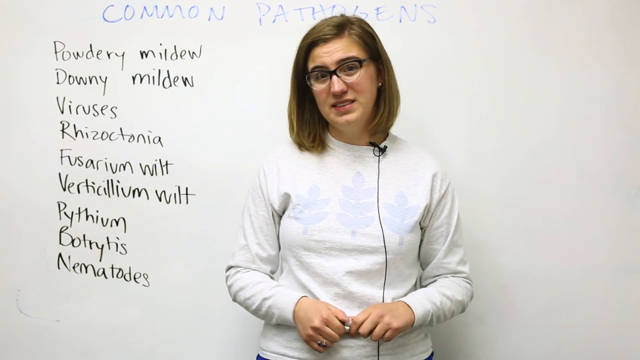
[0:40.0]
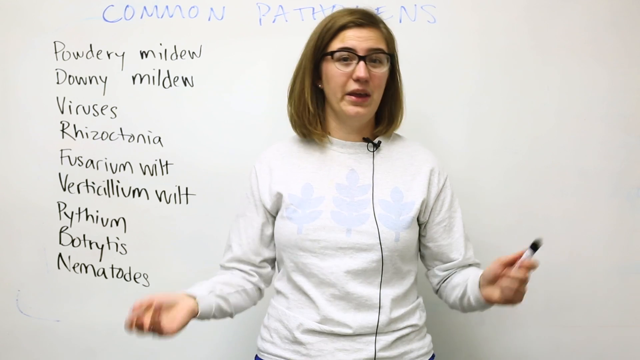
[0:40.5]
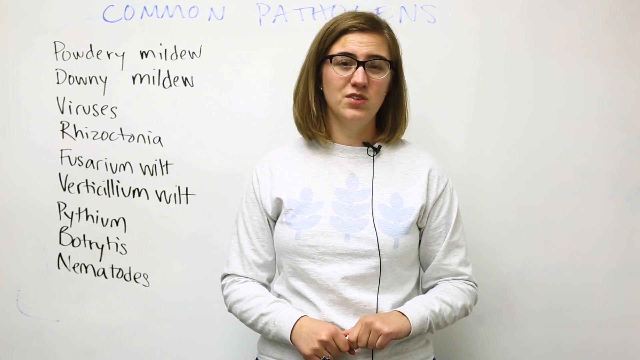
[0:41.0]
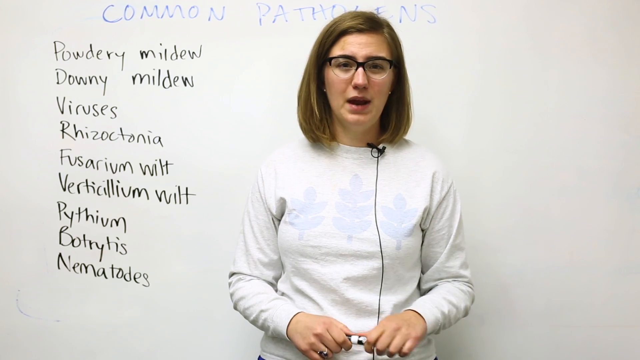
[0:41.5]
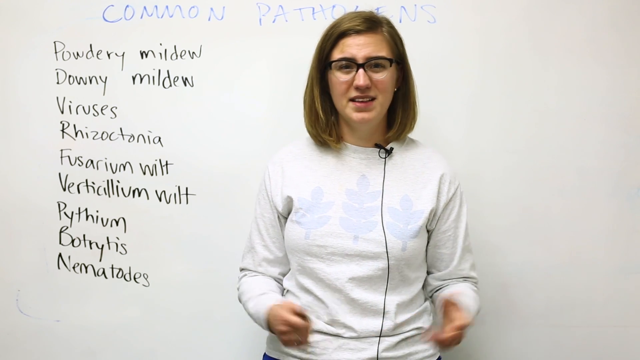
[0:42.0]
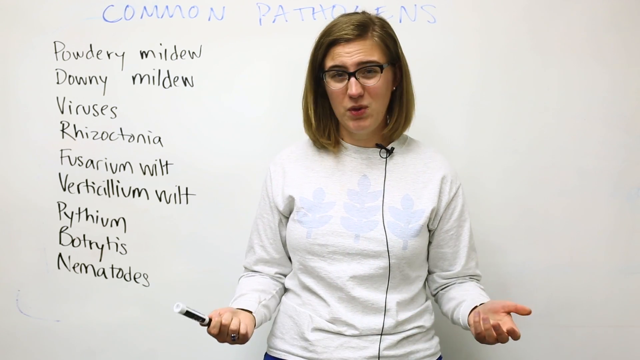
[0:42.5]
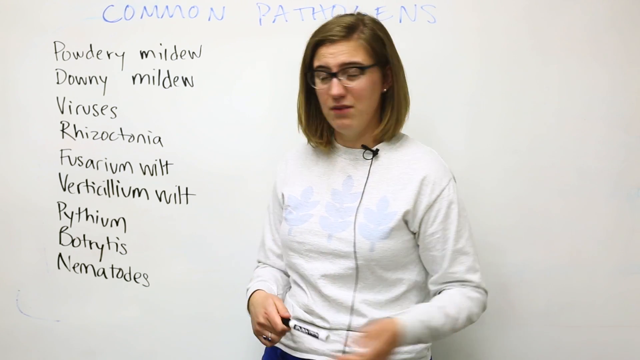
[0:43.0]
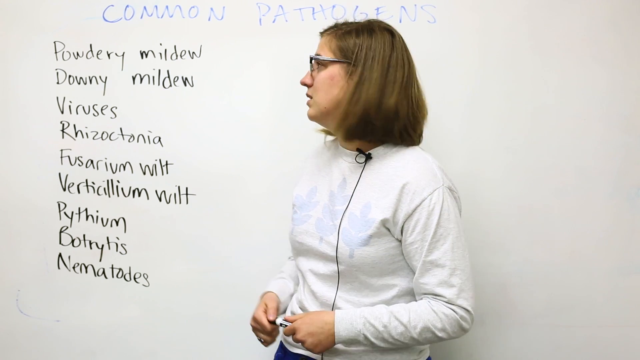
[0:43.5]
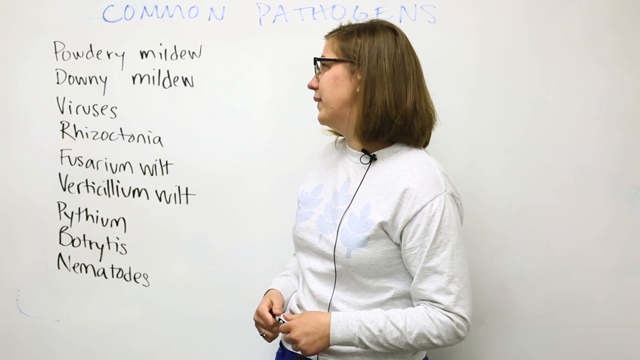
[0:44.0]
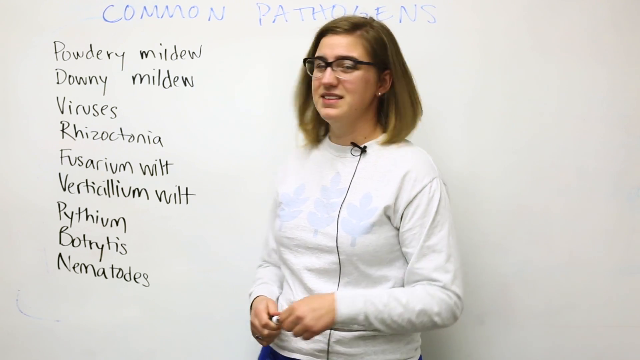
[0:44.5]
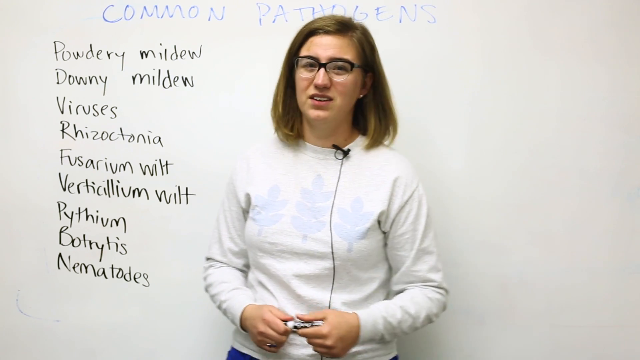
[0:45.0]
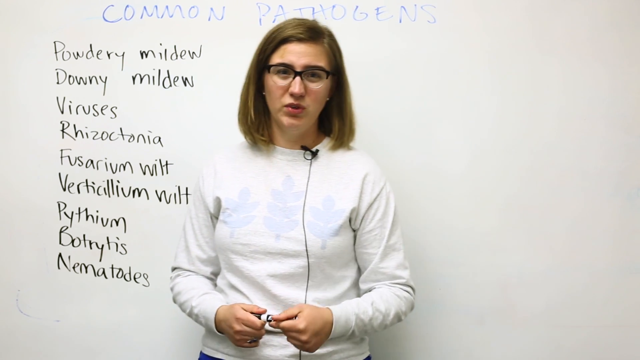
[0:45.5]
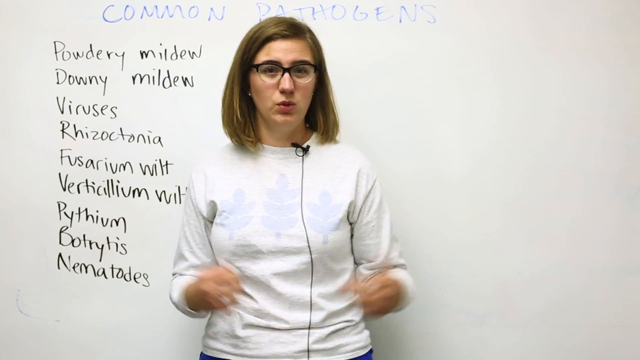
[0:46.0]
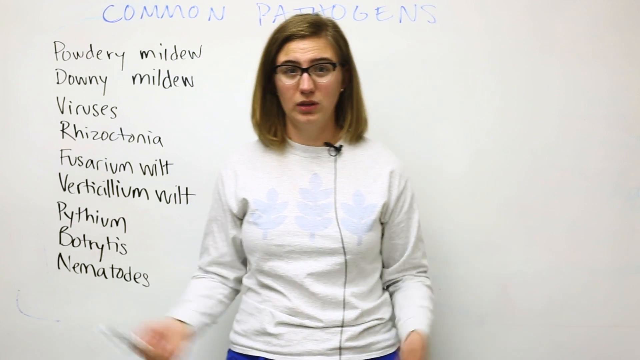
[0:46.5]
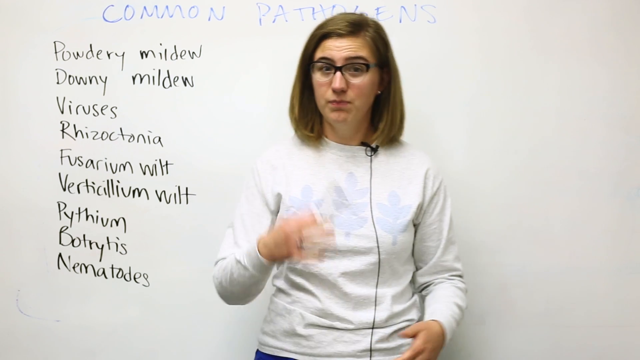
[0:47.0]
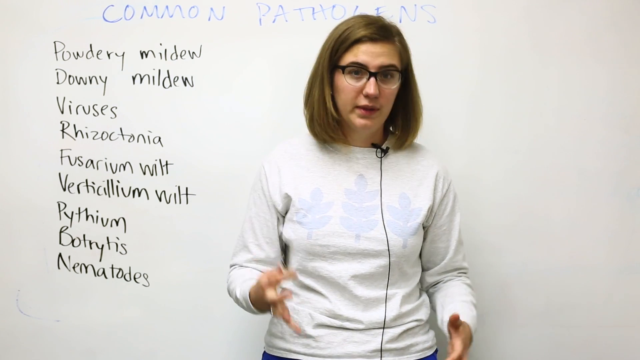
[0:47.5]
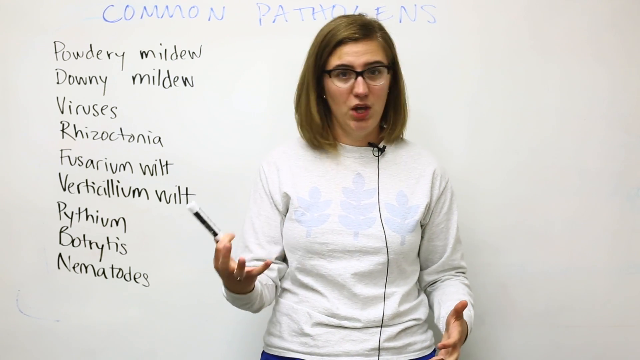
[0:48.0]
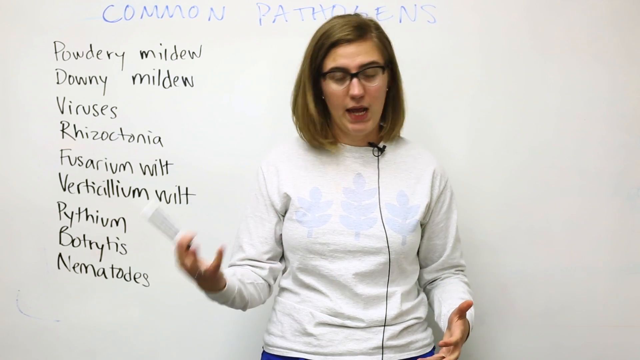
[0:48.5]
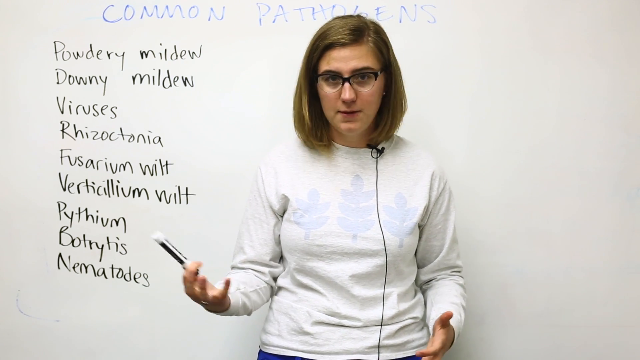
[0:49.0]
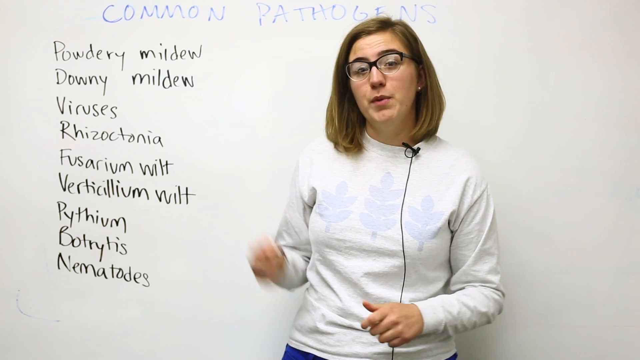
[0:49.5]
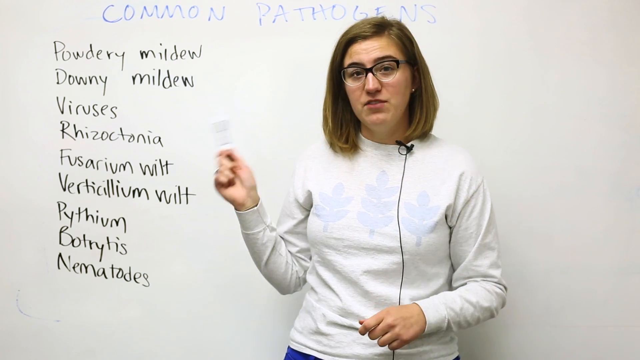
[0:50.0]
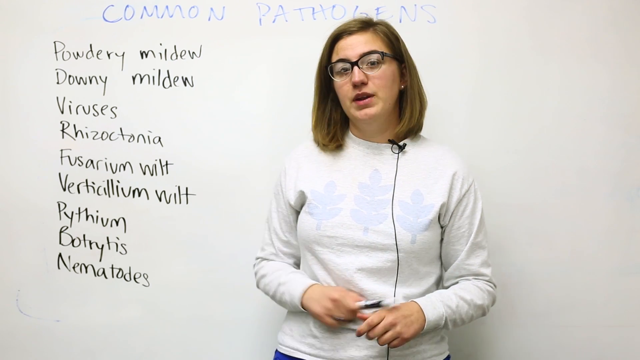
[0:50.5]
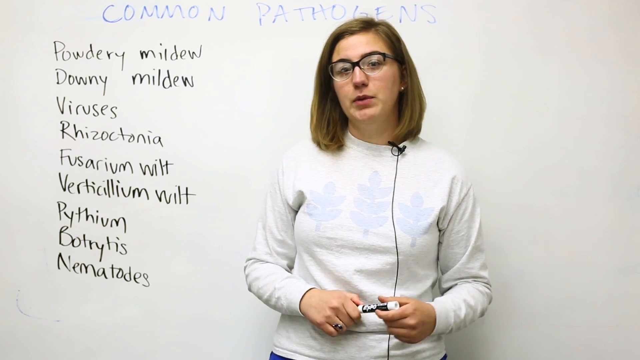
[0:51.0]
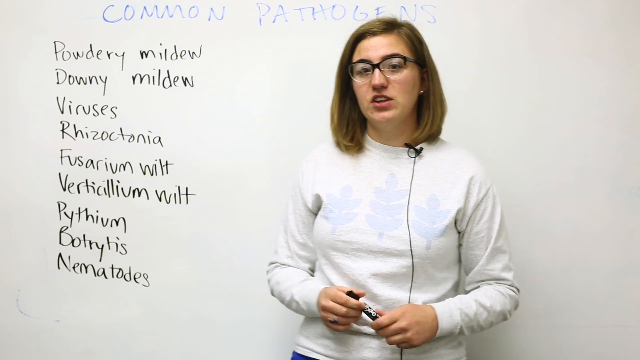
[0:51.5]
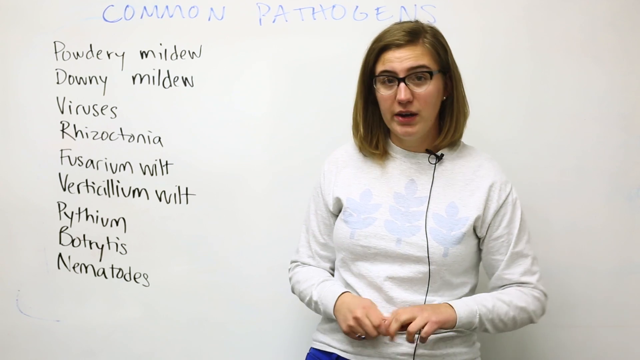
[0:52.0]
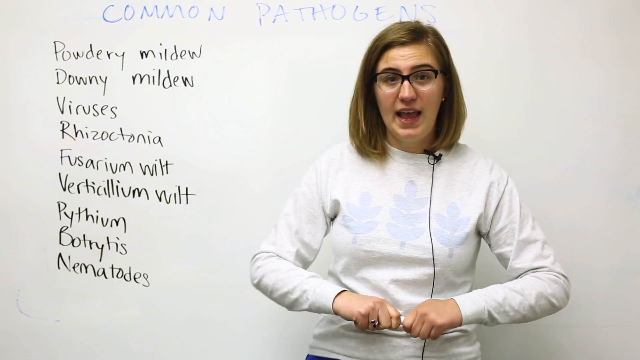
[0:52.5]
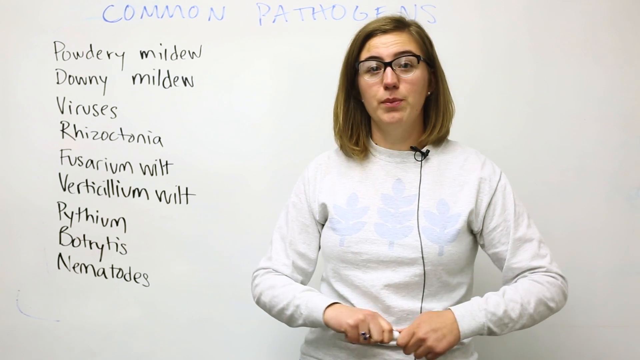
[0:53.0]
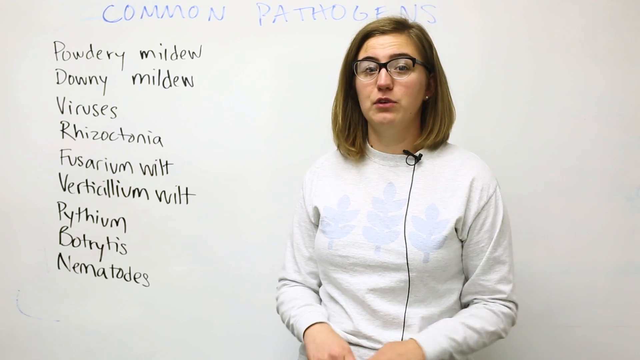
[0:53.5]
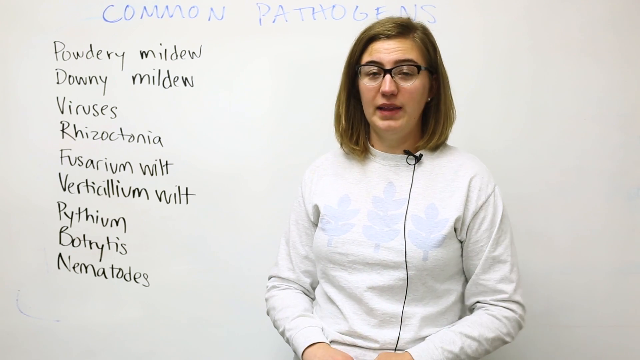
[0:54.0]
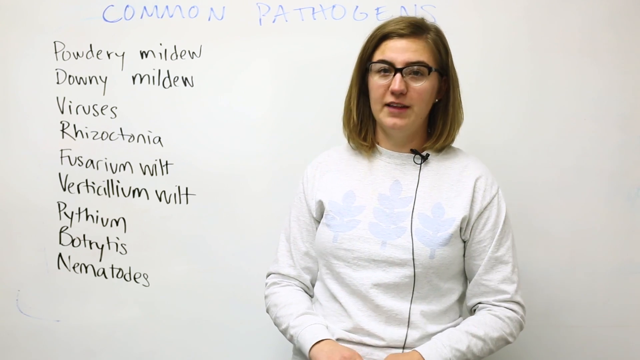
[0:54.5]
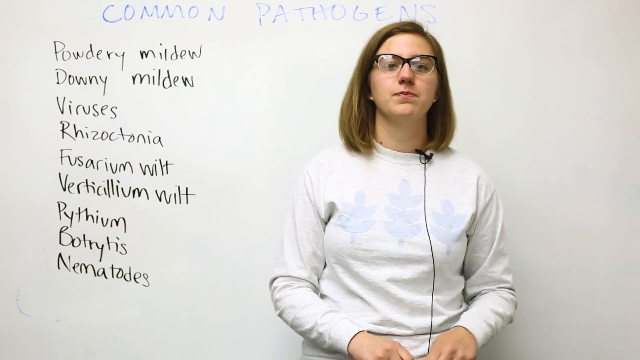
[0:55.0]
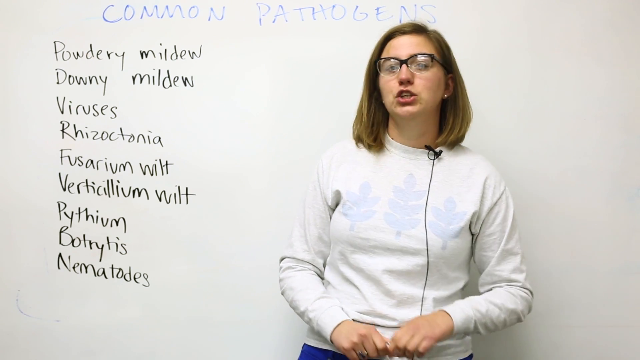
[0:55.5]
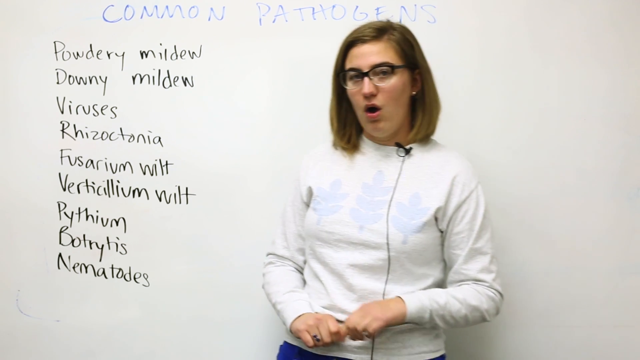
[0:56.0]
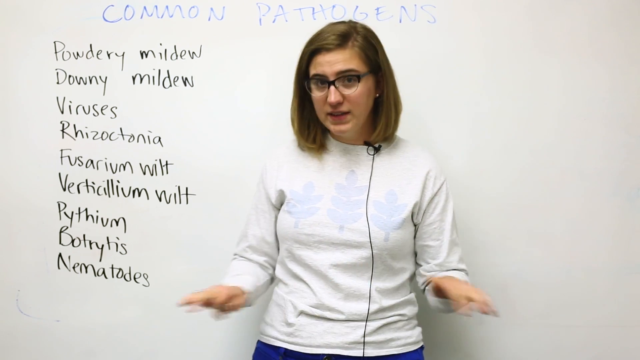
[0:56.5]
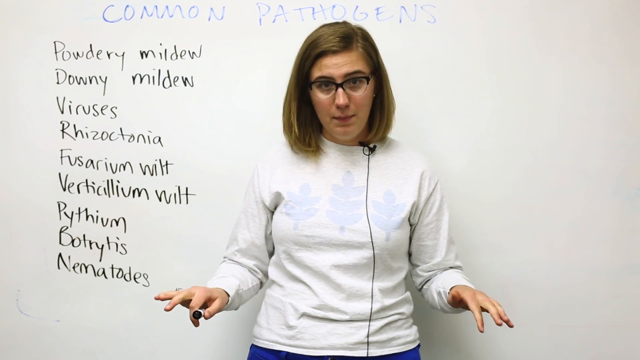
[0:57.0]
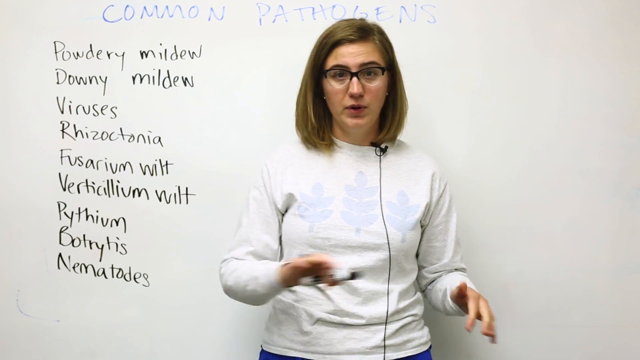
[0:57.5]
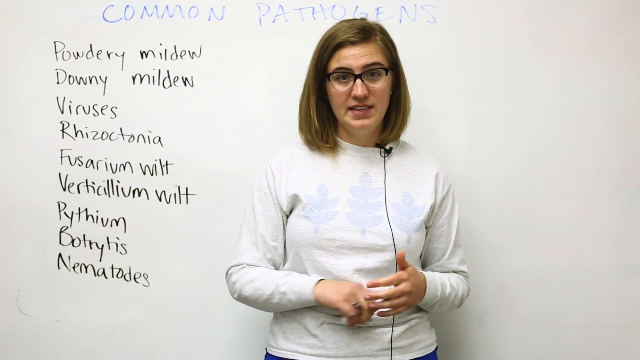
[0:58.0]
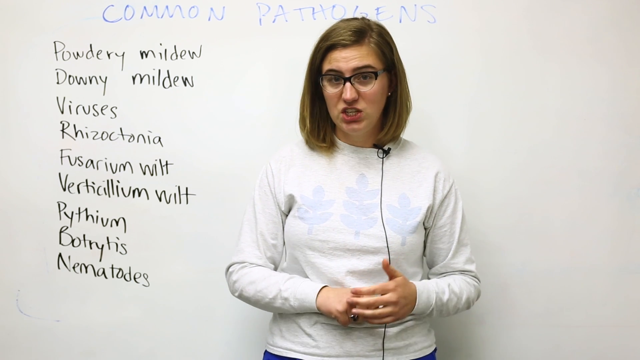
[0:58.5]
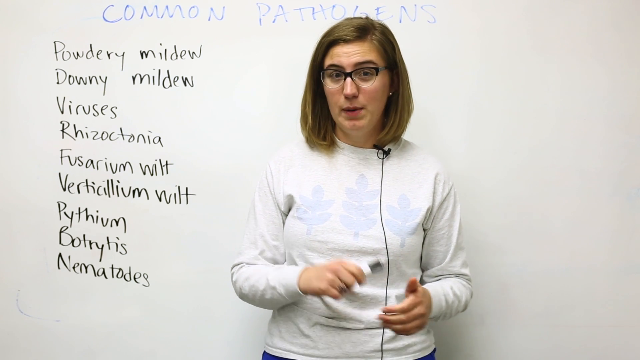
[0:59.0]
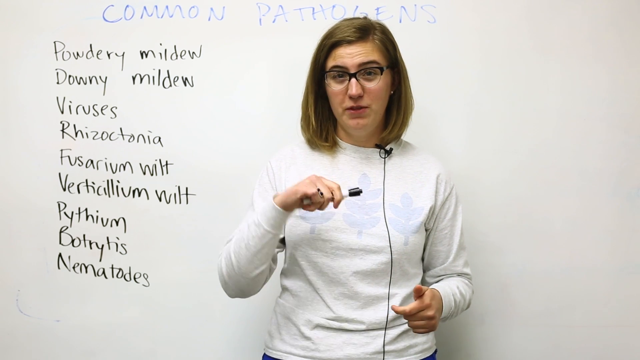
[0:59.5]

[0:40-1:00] A woman stands in a room in front of a whiteboard, talking on camera. At the top of the whiteboard, in blue marker, she has written "common pathogens", and on the left side she has listed several common pathogens in black marker, the first few being "powdery mildew", "downy mildew" and "viruses". She holds the black marker and passes it from one hand to the other from time to time while she talks. She gestures with her hands, moving them out to the sides and then bringing them back together. She wears a white long-sleeved shirt with a microphone clipped to the collar, and its black cord runs down the front of the shirt and toward the ground. Her brown hair is shoulder length, touching the tops of her shoulders. Her glasses are kind of thick-rimmed on the top and thin-rimmed on the bottom. She stands mostly facing the camera and talks the entire time.